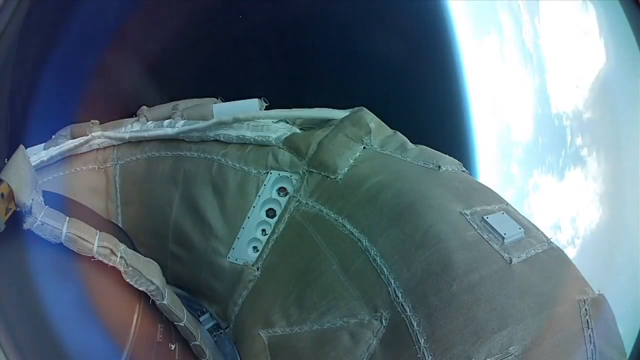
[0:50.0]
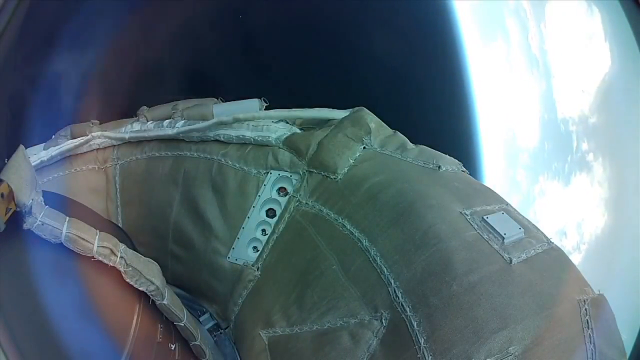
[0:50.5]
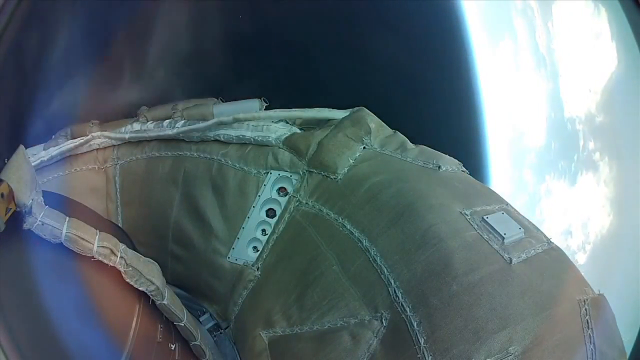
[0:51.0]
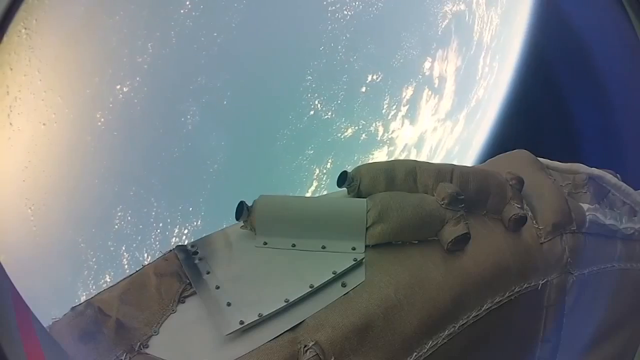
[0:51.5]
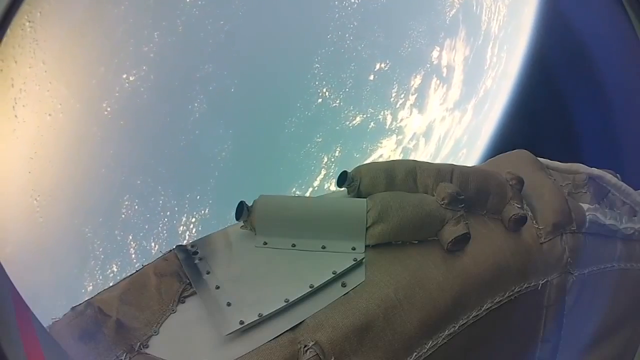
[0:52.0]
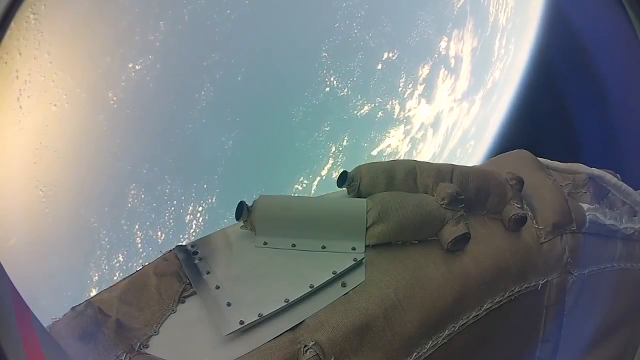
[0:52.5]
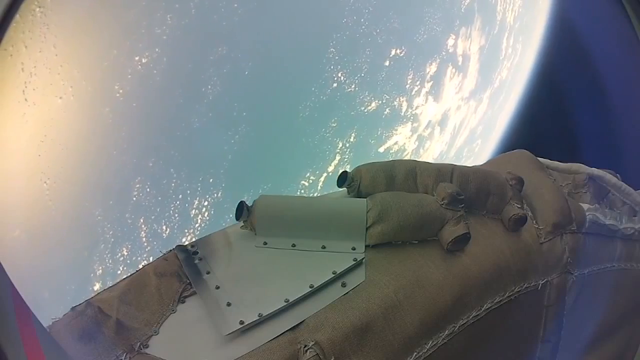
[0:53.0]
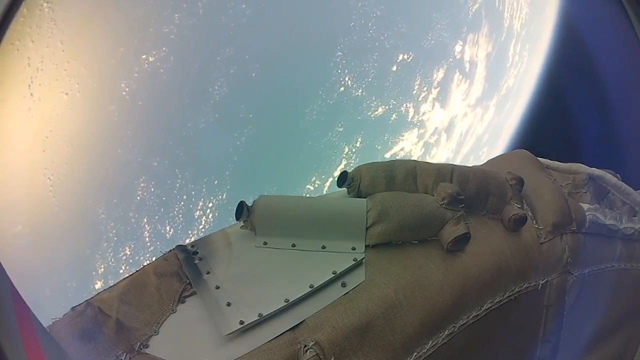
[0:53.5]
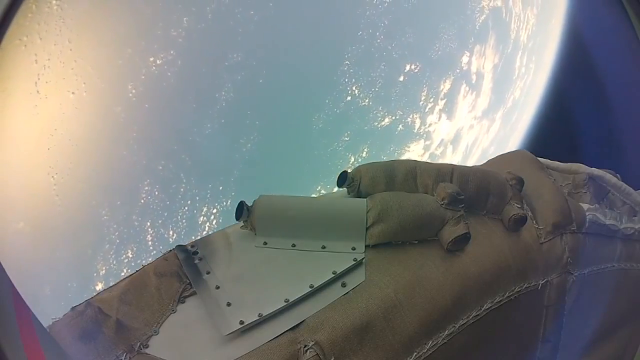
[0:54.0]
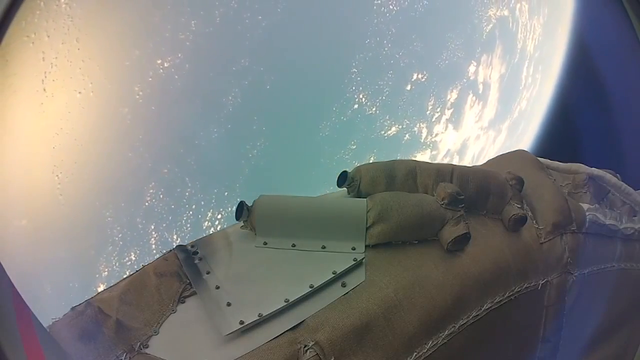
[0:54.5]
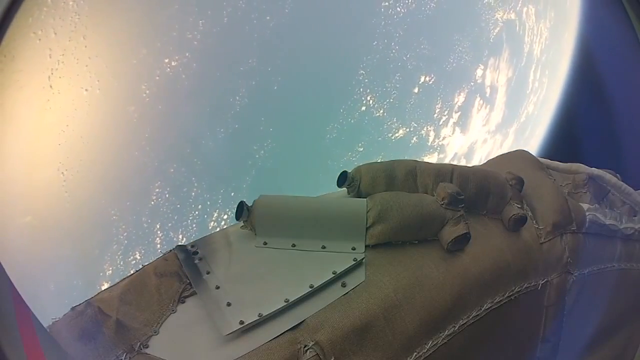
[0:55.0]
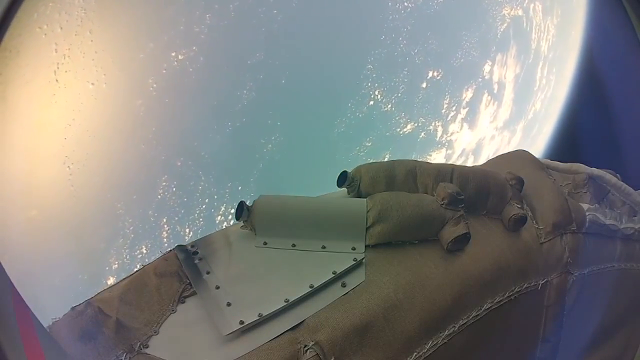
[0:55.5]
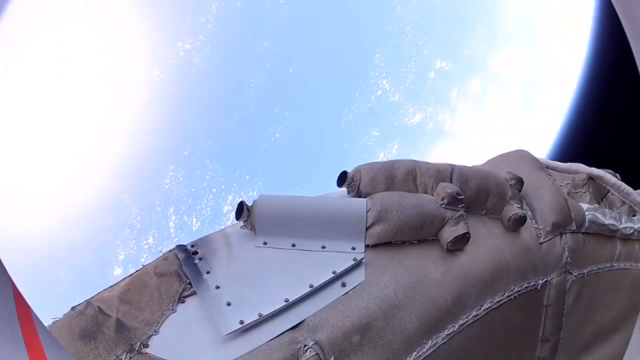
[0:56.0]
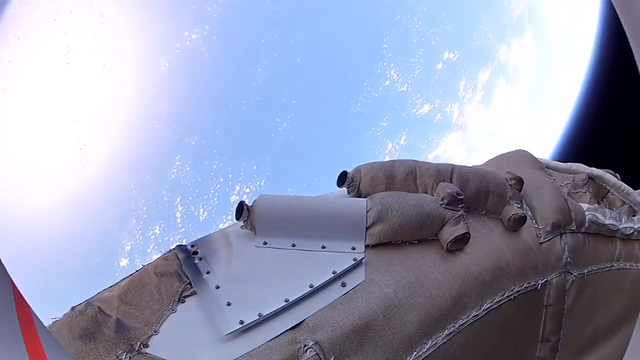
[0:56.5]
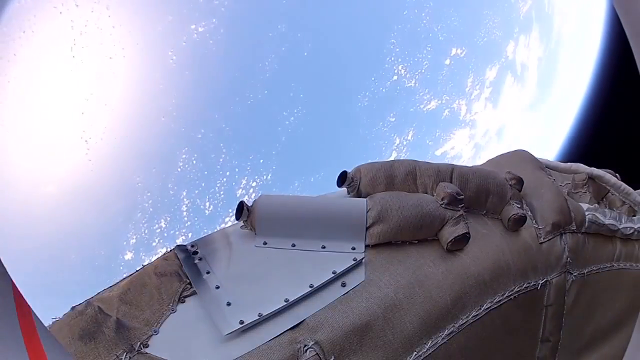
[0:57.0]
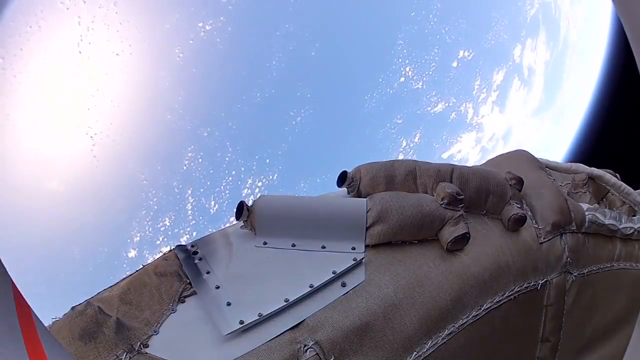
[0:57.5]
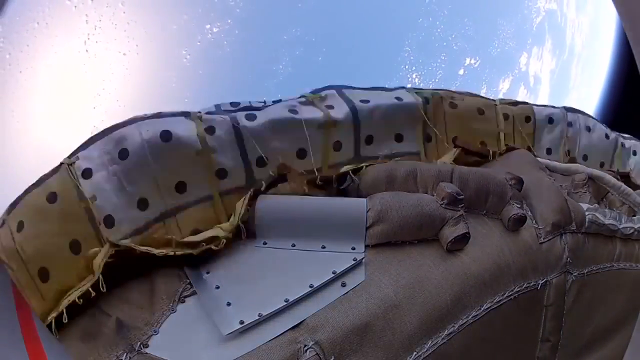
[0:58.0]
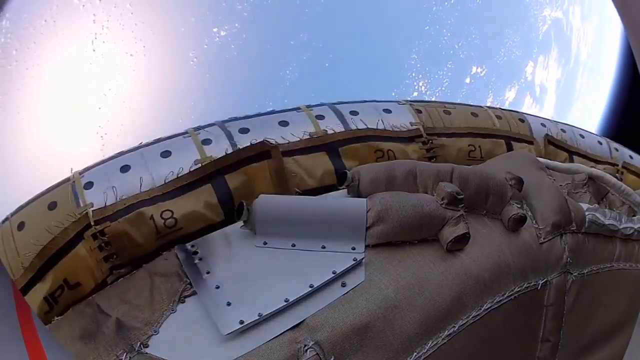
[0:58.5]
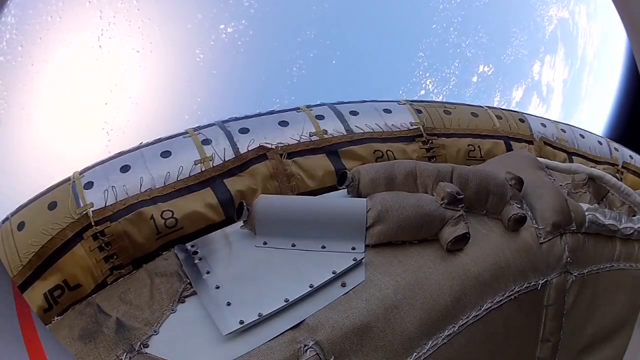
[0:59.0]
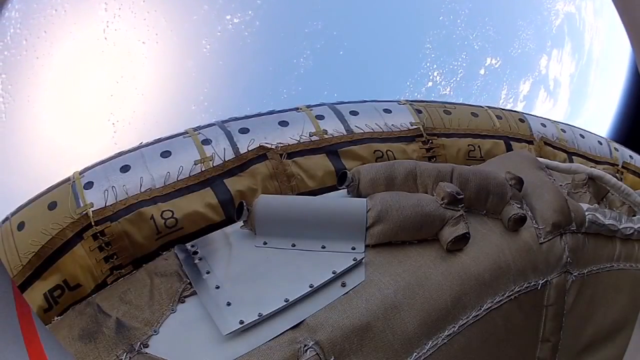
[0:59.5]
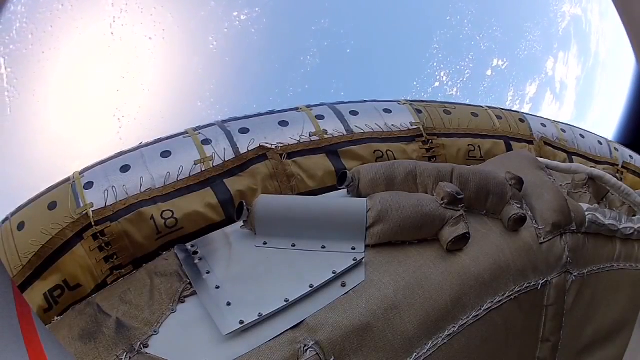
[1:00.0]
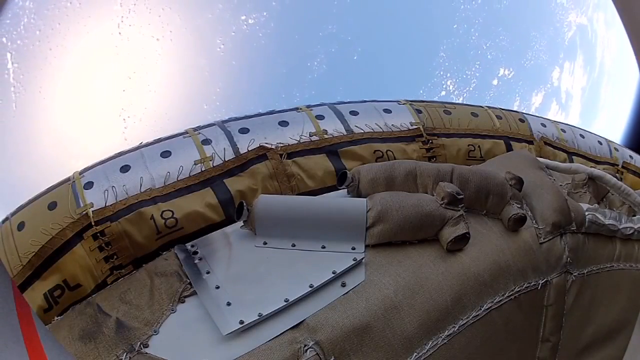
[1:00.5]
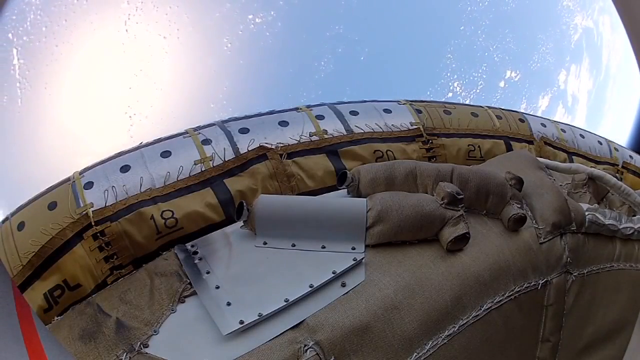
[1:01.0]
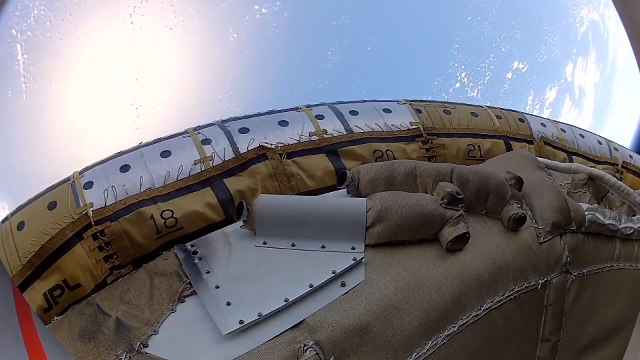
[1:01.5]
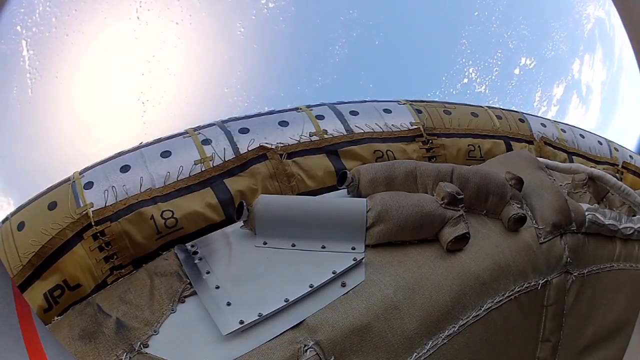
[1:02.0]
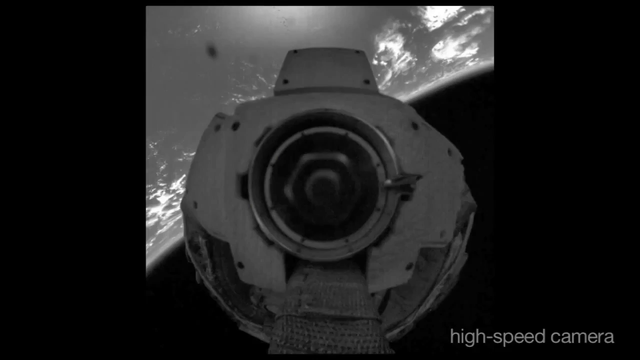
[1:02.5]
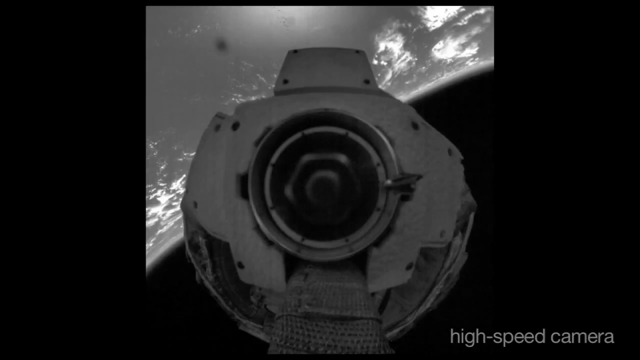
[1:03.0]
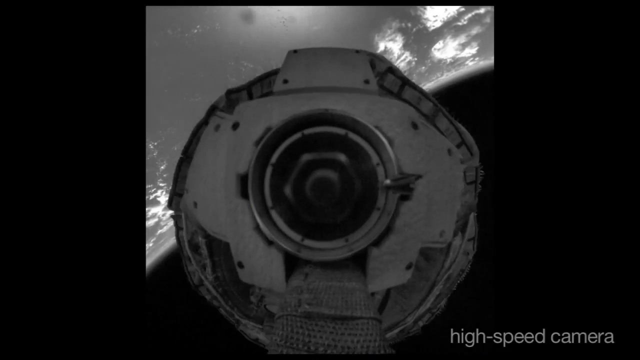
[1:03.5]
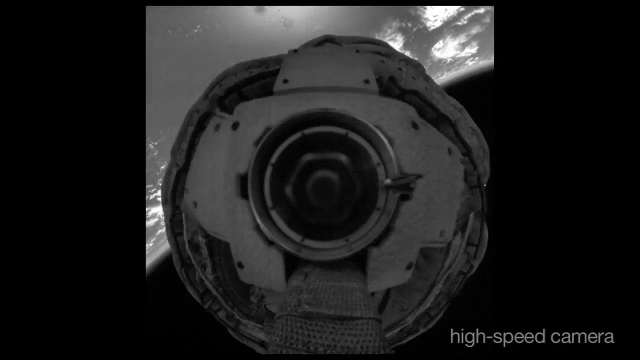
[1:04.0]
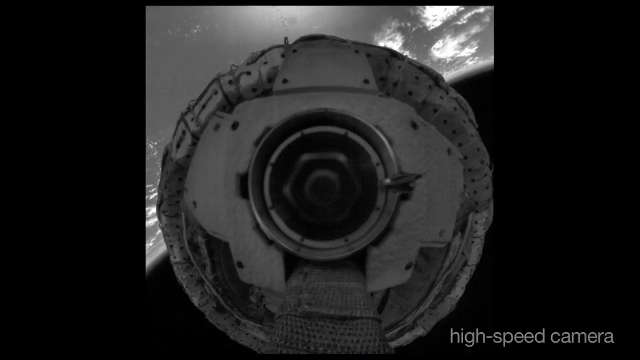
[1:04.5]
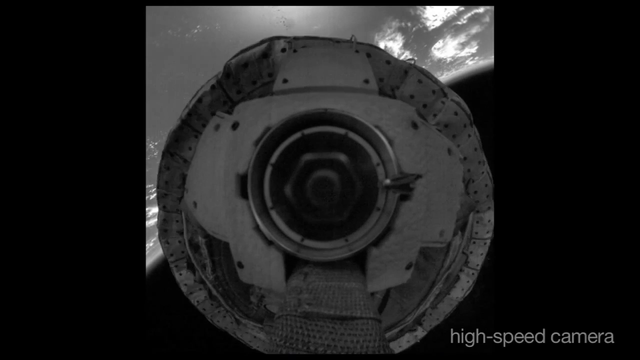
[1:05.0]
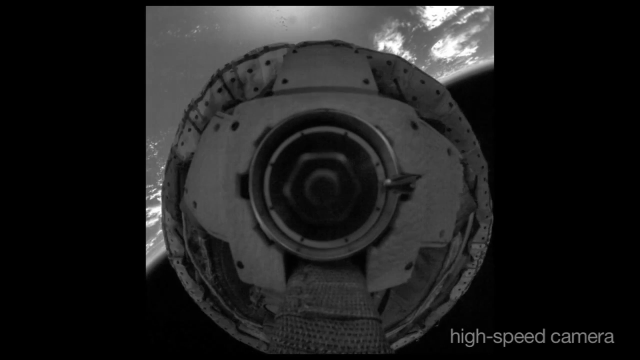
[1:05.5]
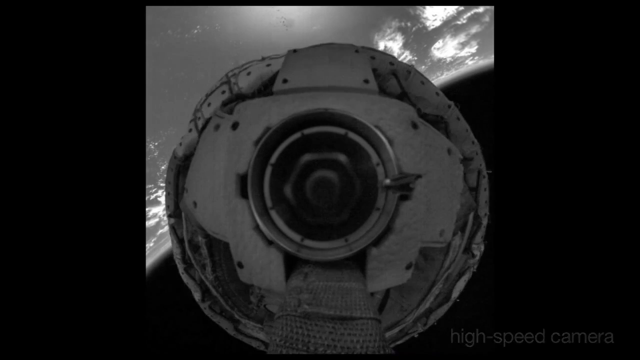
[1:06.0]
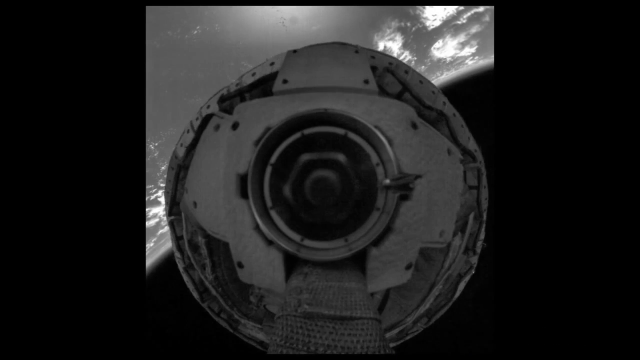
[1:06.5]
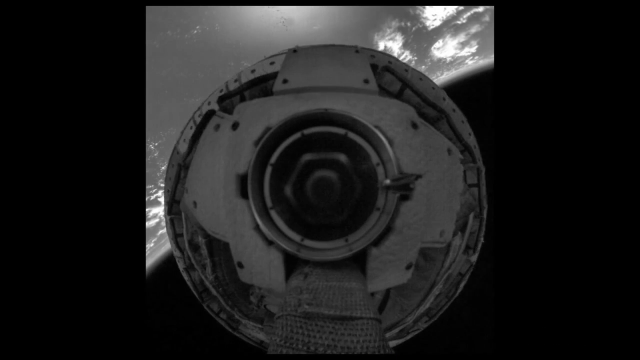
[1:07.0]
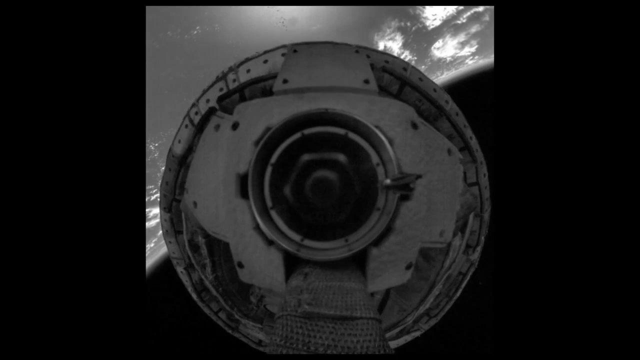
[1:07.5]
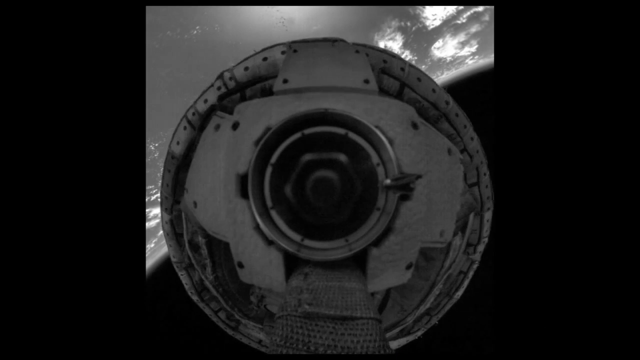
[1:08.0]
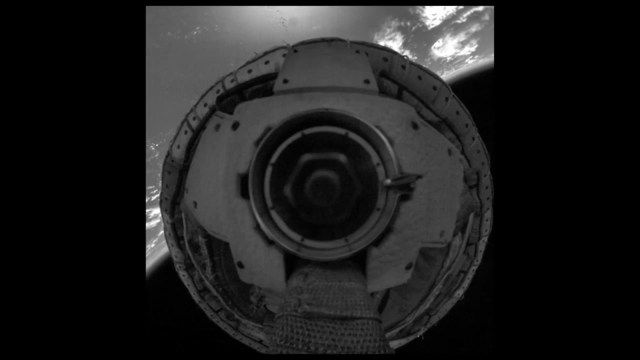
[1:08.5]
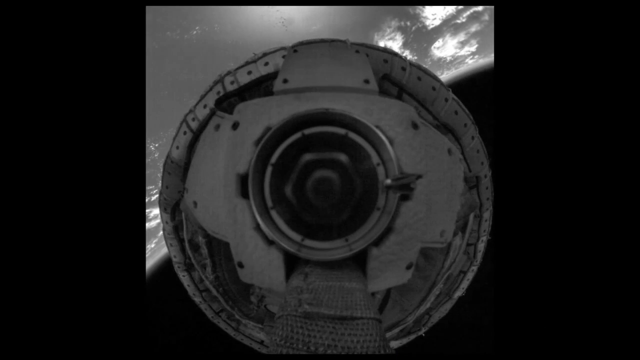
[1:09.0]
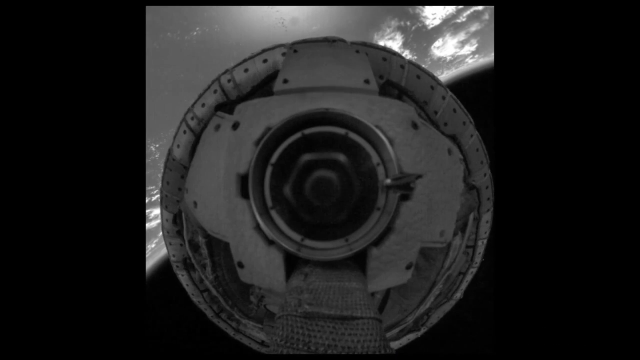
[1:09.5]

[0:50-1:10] The balloon and the image stop spinning, and the device slowly kind of bobs through space as it hangs above the atmosphere. A flotation-like device pops out, so the device looks surrounded by something like a life preserver. A view of the whole device shows it being inflated: a circular, eyeball-looking piece of space machinery with something like a life vest around it, slowly bobbing as it floats above the atmosphere. The footage of the device itself is black and white, while the footage from the other camera is normal, showing the blue Earth down below. Numbers on the flotation-looking device circling the machinery include 18, 20 and 21, along with the letters J-P-L.